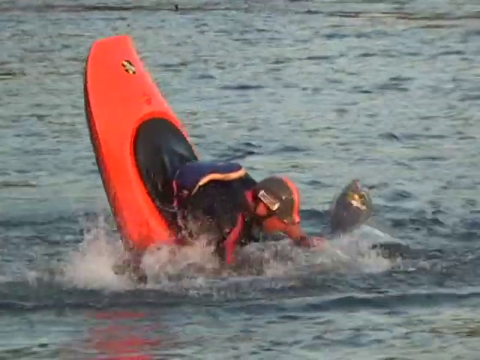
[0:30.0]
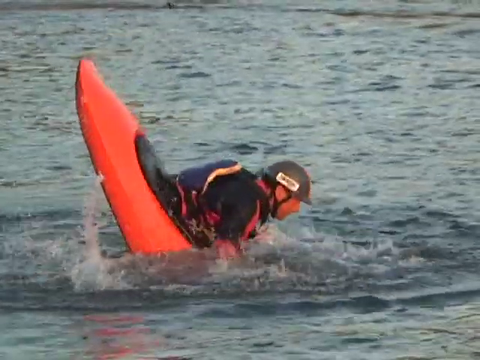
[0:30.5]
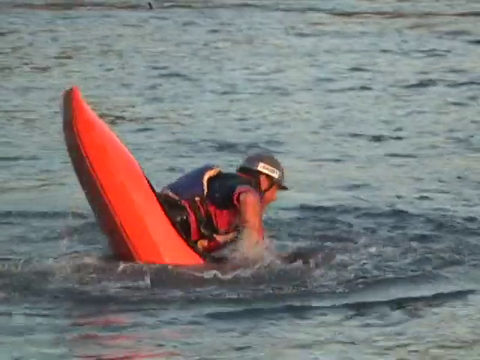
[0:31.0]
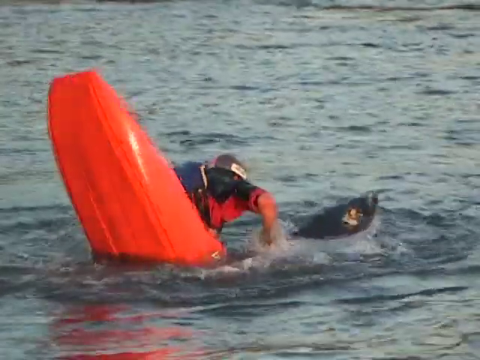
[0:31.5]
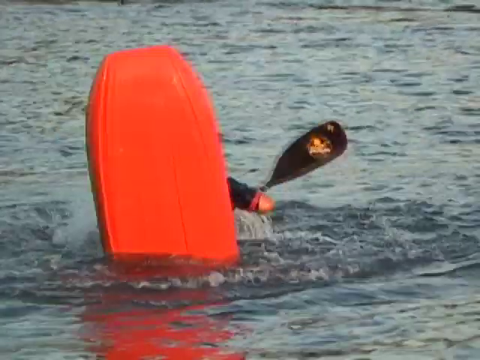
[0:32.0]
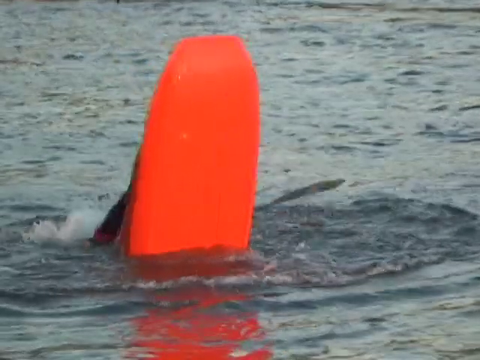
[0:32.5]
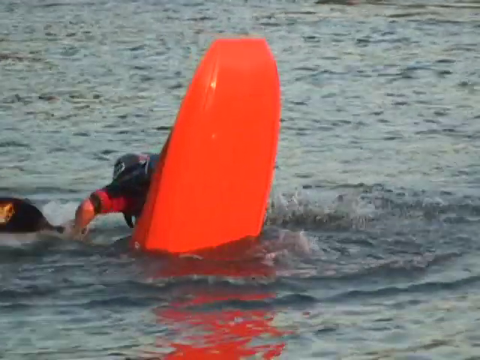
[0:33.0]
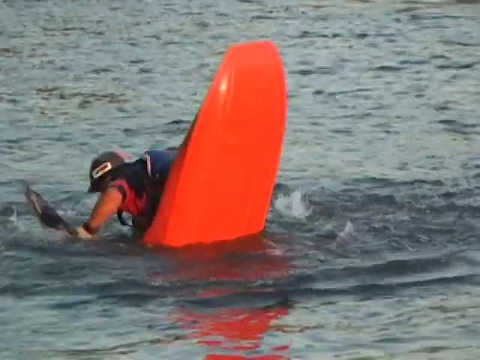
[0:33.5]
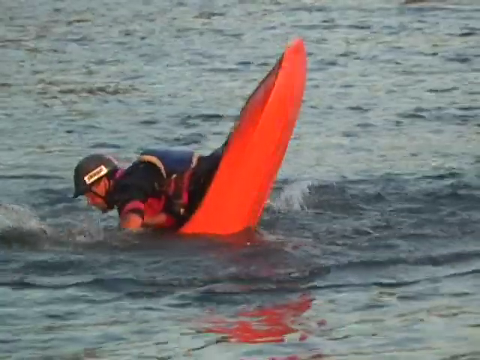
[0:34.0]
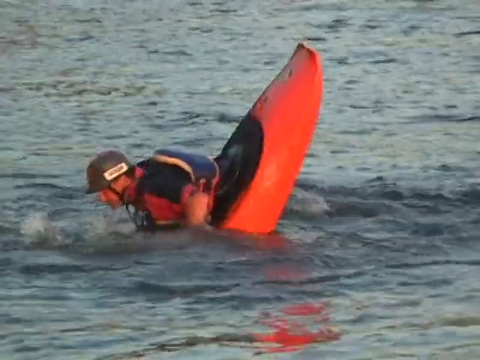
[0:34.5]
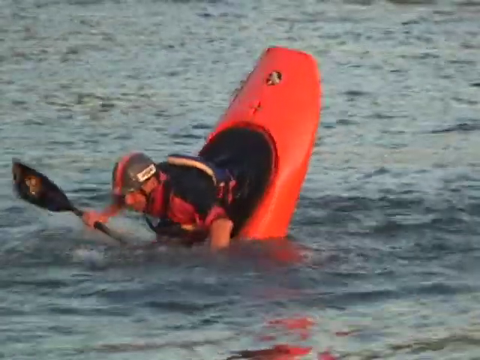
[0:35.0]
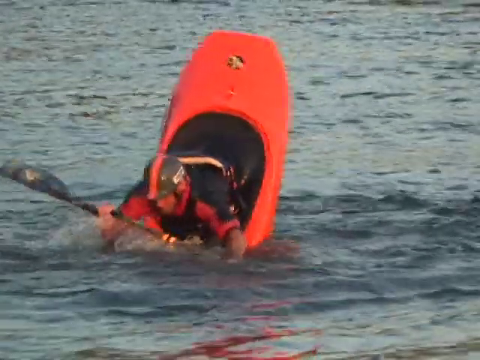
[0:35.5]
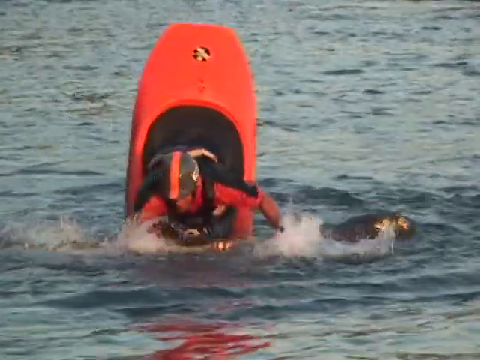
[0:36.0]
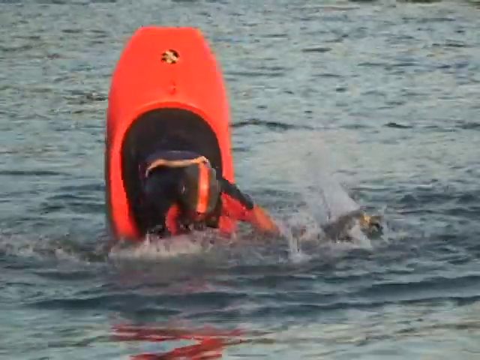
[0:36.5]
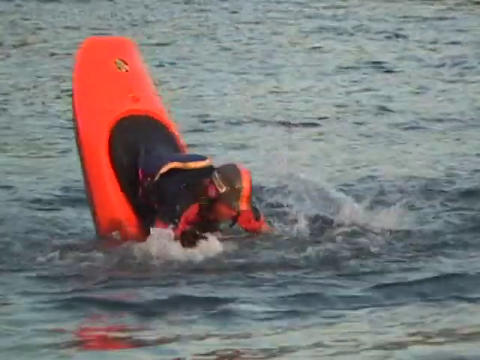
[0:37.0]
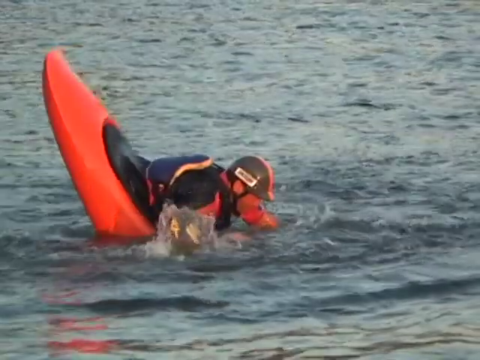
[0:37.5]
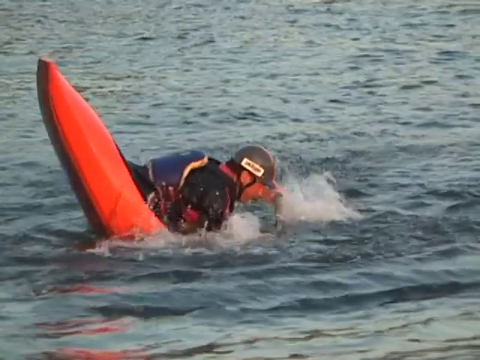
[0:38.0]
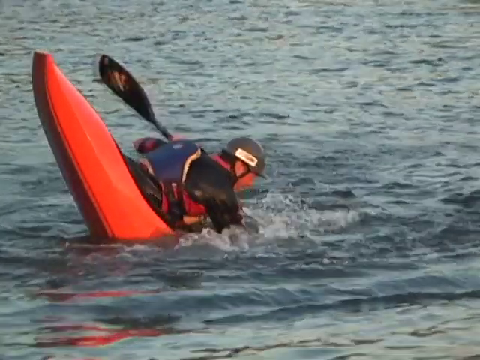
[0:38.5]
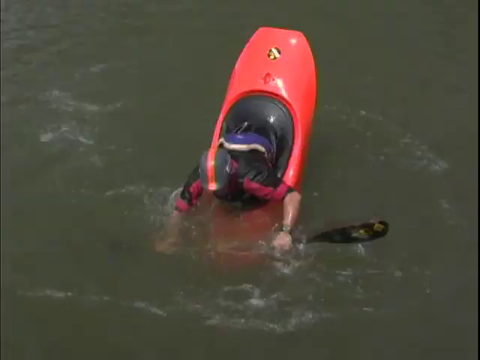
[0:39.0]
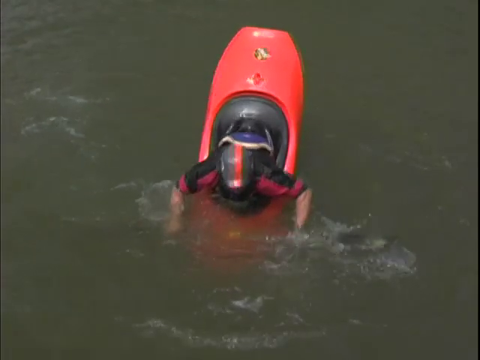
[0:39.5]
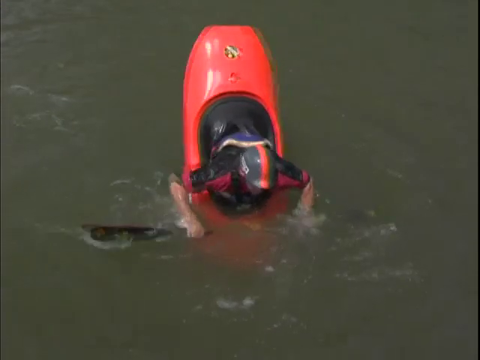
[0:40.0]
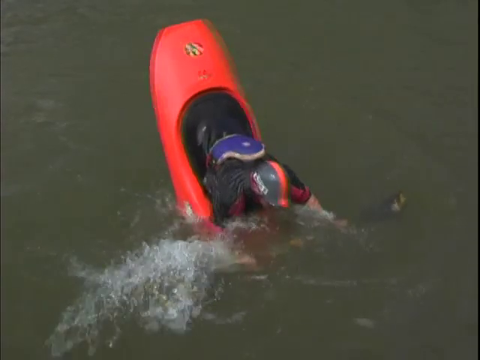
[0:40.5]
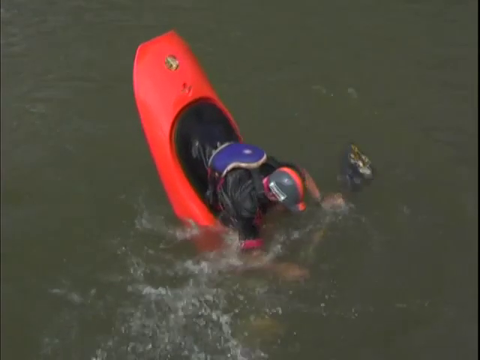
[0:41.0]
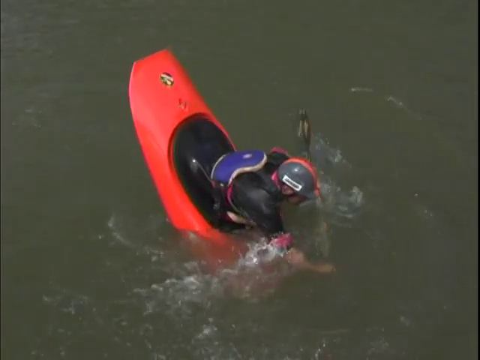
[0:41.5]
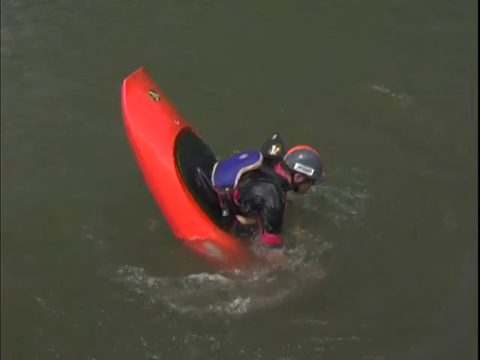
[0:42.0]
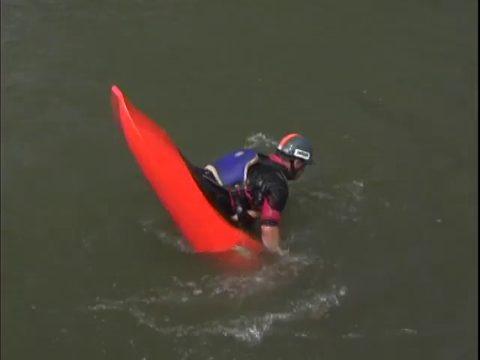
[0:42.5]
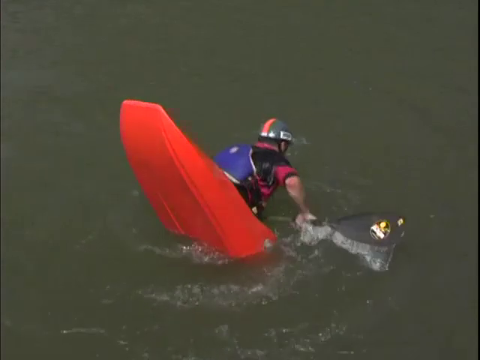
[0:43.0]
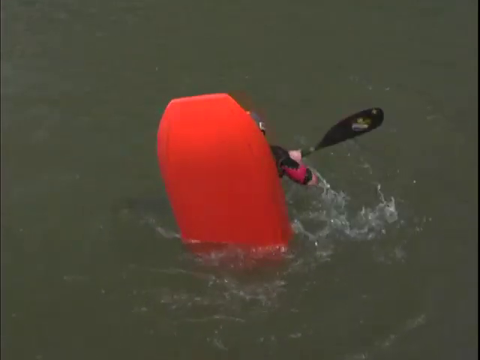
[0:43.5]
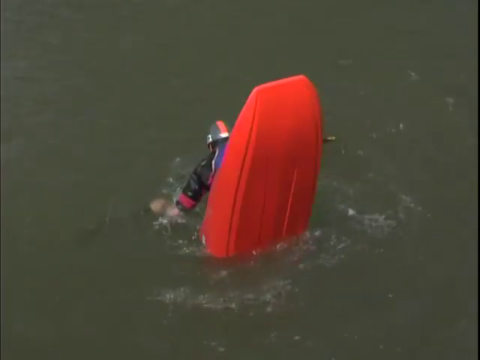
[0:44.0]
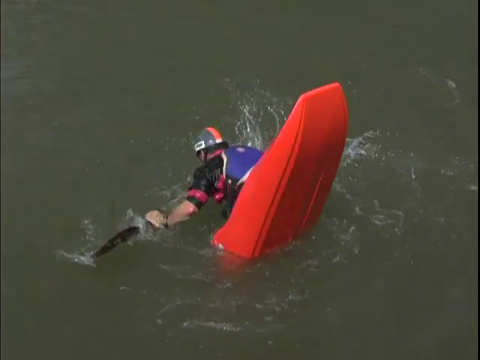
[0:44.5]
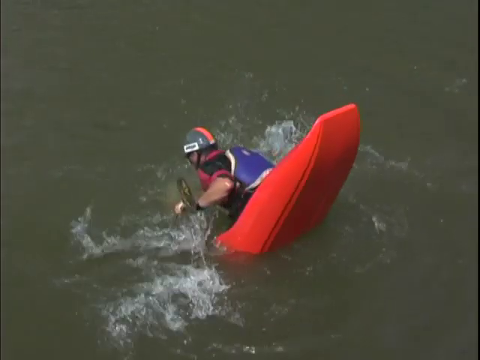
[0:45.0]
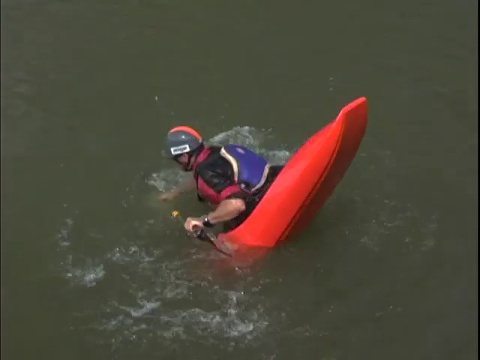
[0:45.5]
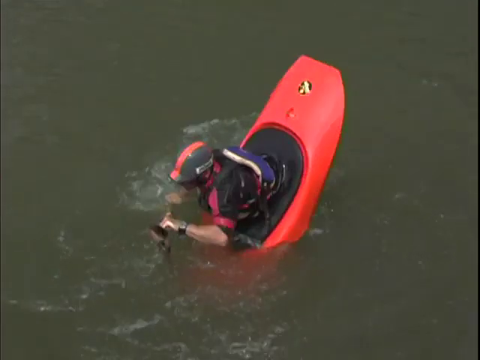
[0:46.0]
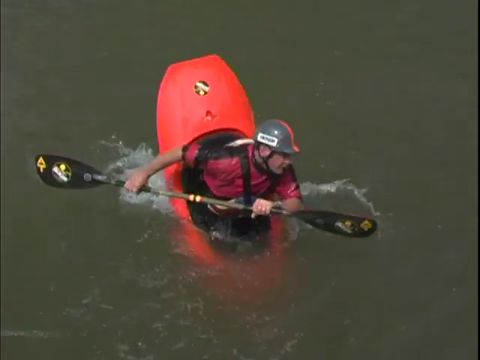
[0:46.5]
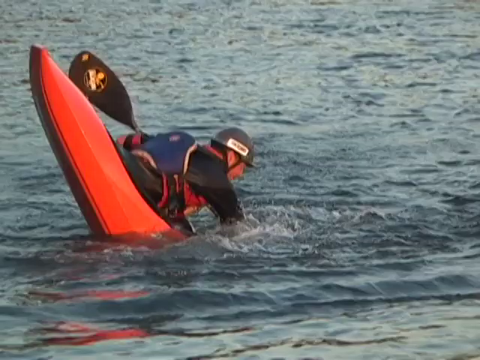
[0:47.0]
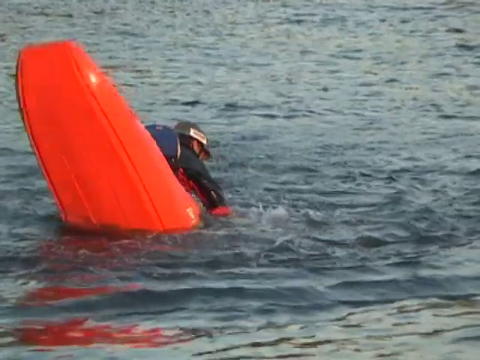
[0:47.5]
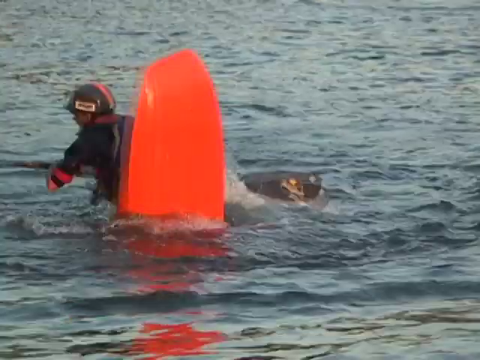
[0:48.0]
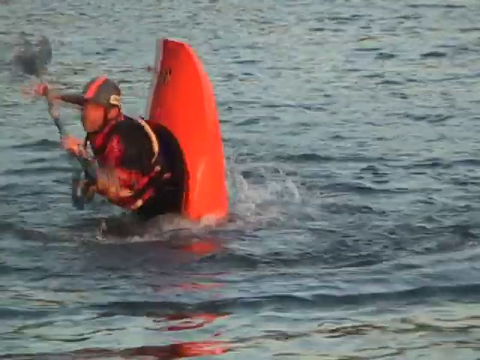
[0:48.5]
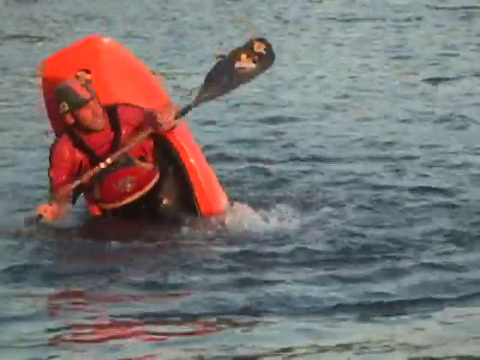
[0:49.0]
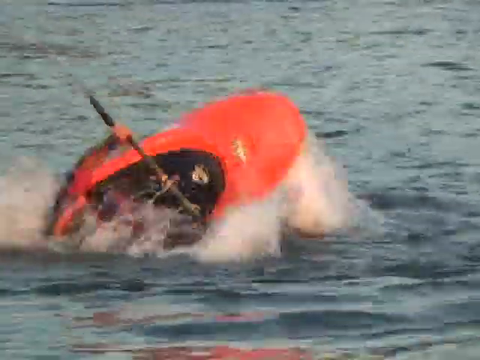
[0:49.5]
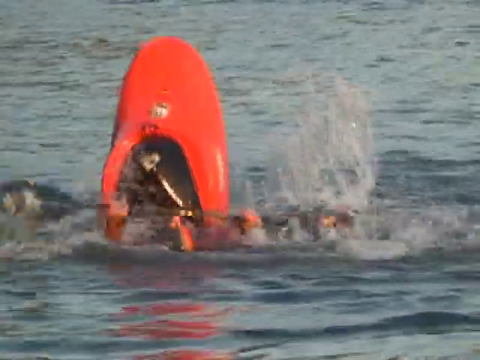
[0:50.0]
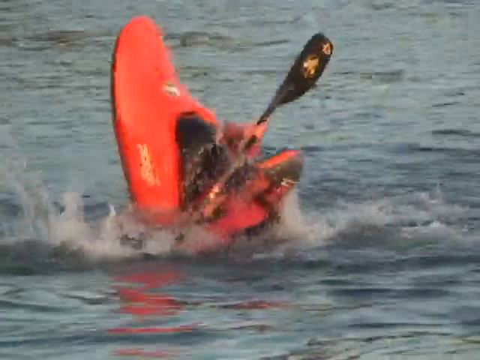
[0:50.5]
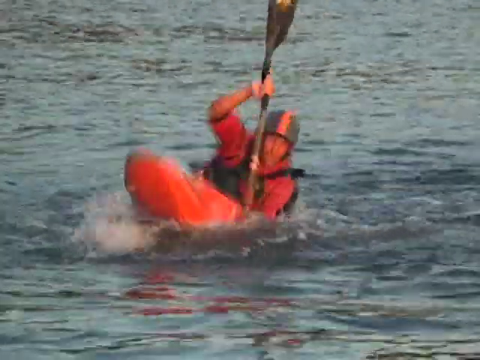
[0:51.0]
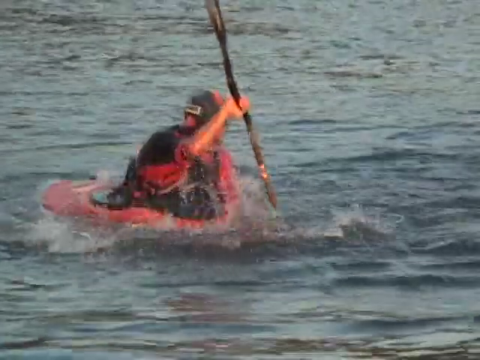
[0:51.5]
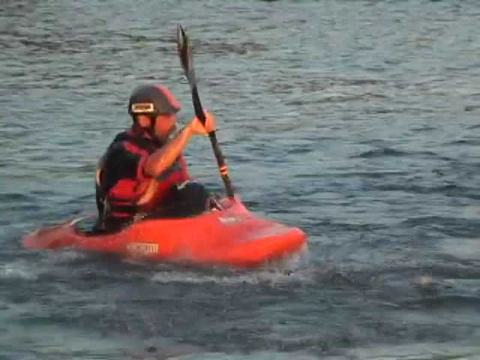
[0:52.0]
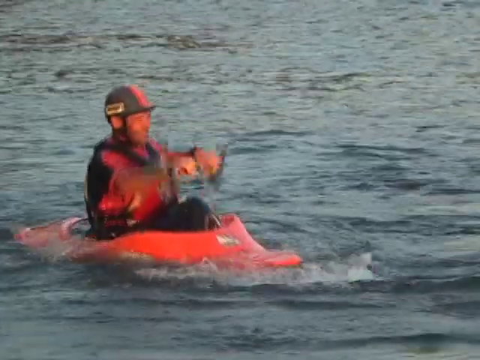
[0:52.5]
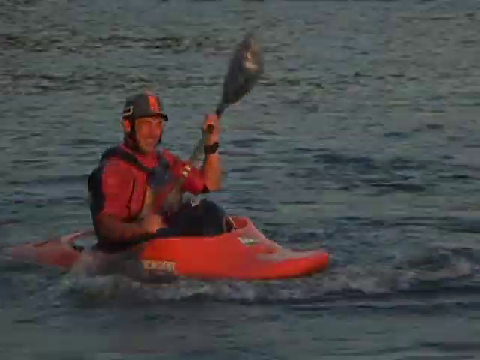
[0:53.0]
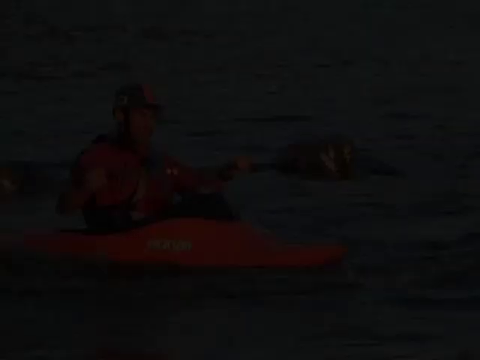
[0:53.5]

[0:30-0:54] The contestant or athlete continues the same motions, going in circles and trying to hold himself up. The view then transitions to a bird's-eye overview, showing that the water is green or brown. He makes a 360 in which he goes over, then falls flat and smiles as the kayak is flat on the water. He uses his paddle to keep balance. During the 360 he wraps around himself, making sure he comes up on the right side of the boat rather than falling over with his body under the water, and he successfully completes the 360 while staying above. The video then transitions to a black screen as the person fades away.